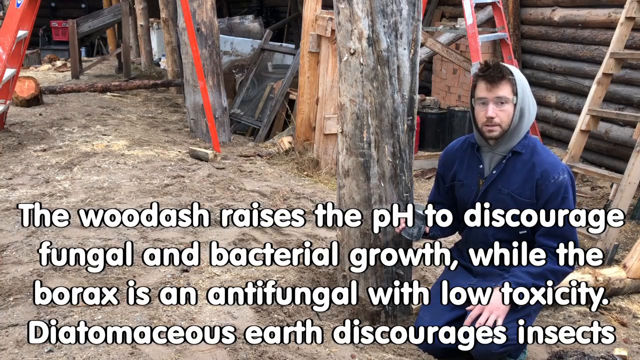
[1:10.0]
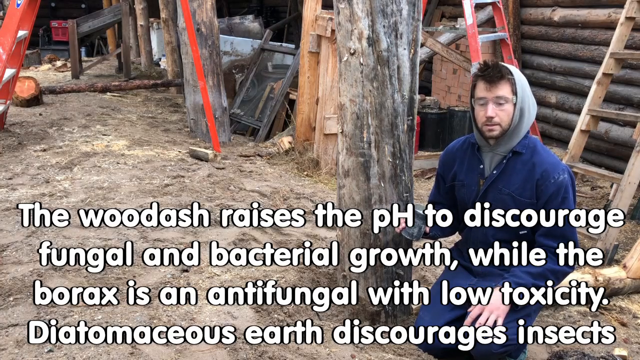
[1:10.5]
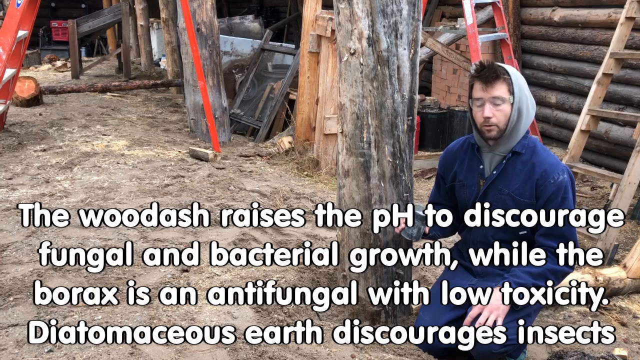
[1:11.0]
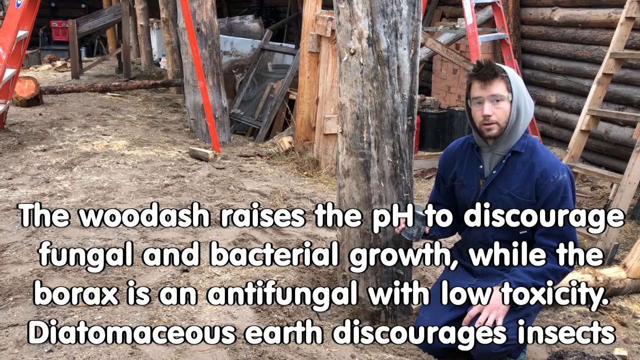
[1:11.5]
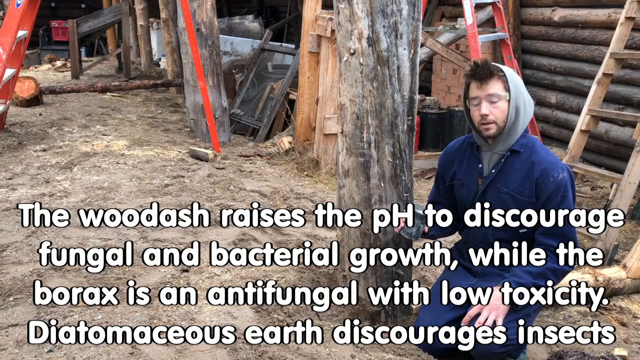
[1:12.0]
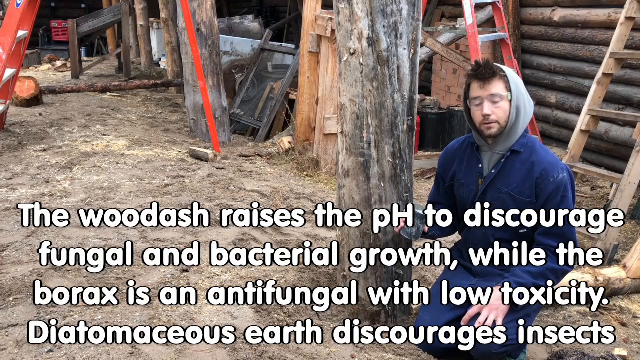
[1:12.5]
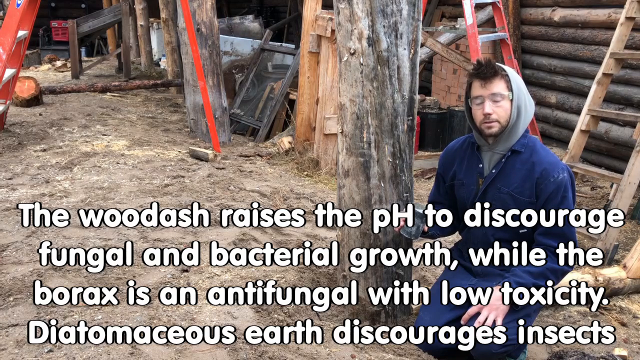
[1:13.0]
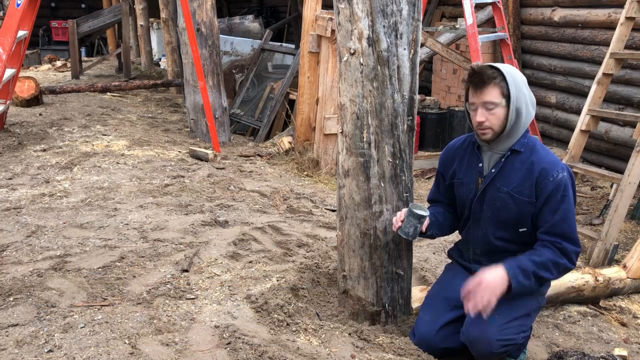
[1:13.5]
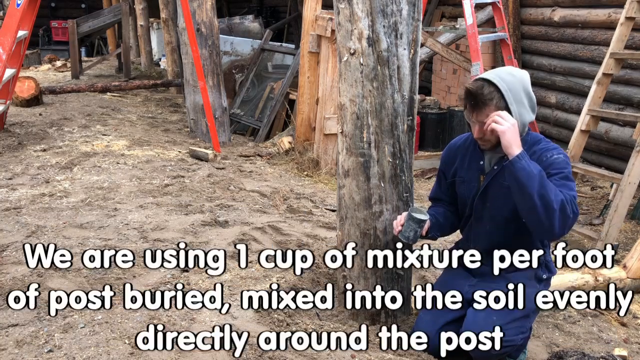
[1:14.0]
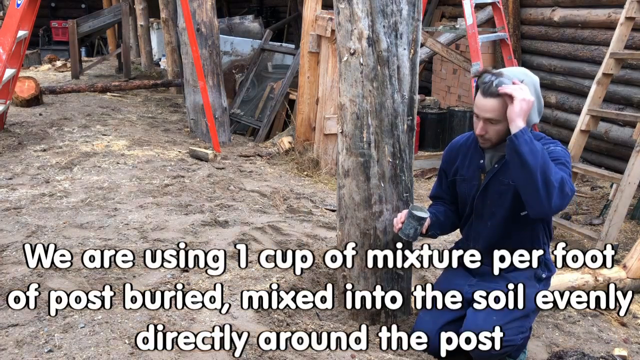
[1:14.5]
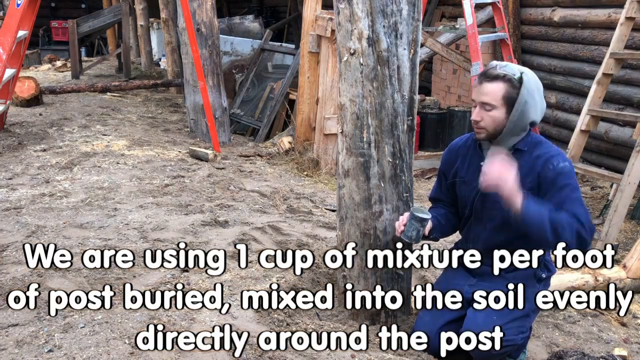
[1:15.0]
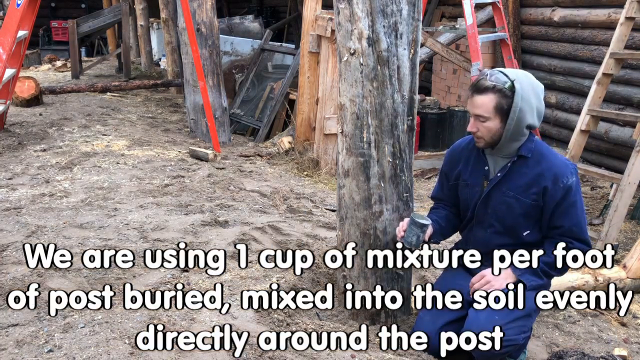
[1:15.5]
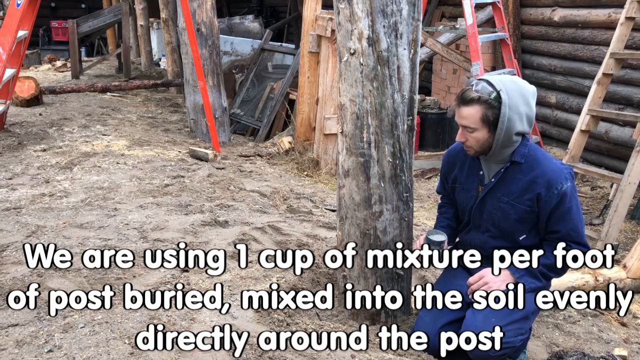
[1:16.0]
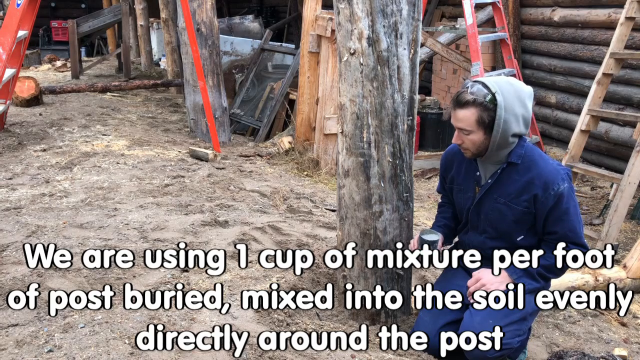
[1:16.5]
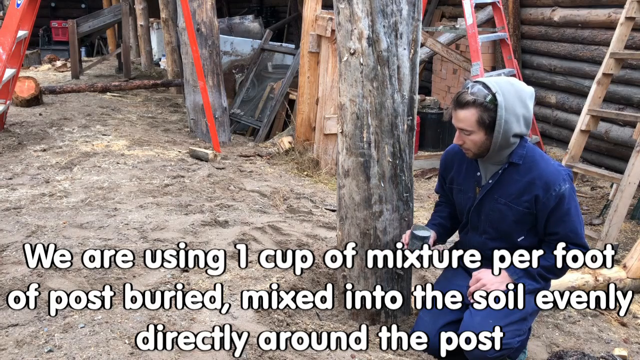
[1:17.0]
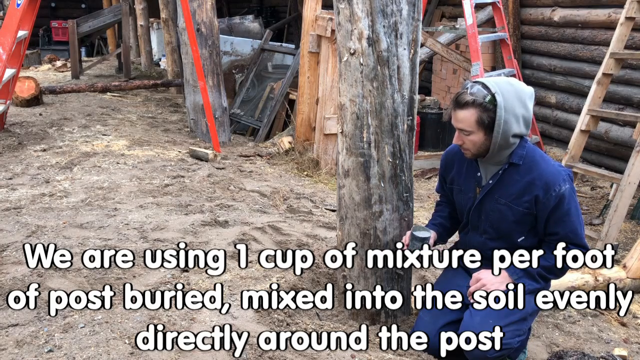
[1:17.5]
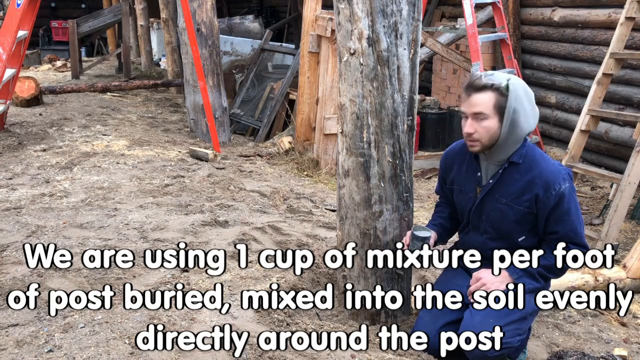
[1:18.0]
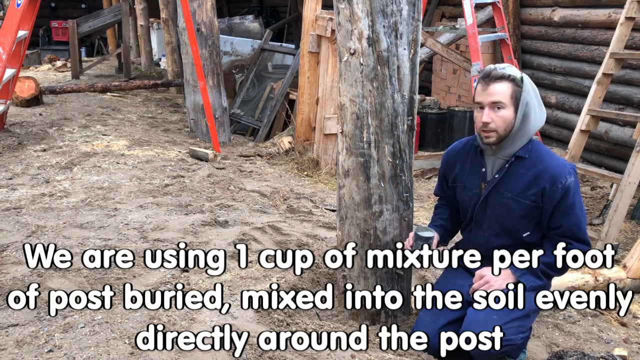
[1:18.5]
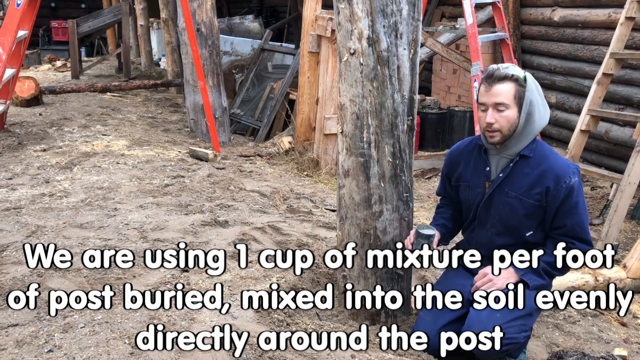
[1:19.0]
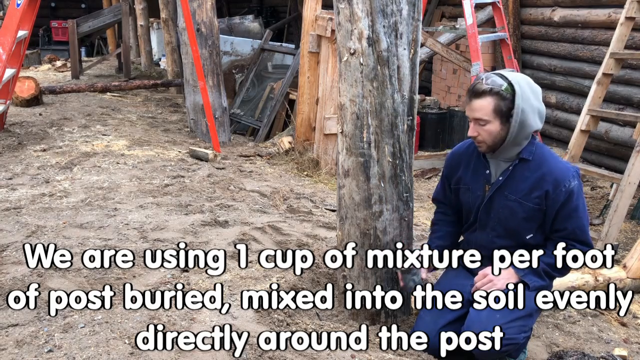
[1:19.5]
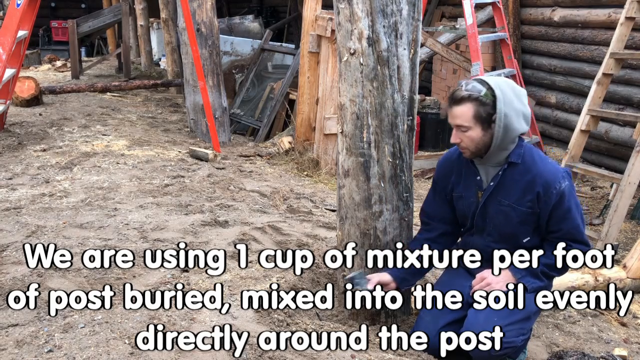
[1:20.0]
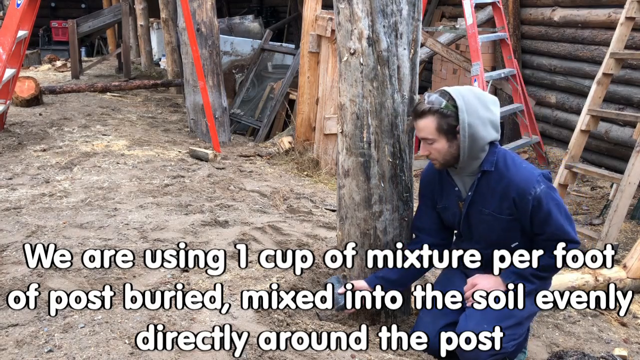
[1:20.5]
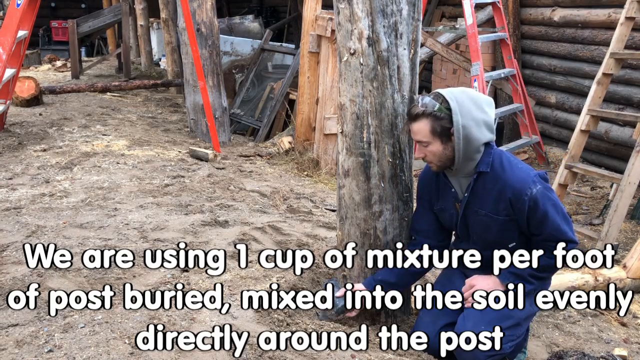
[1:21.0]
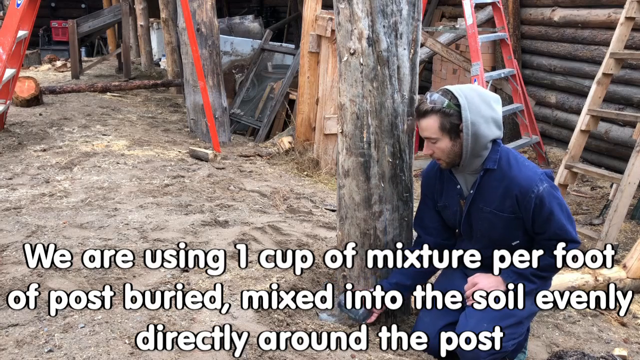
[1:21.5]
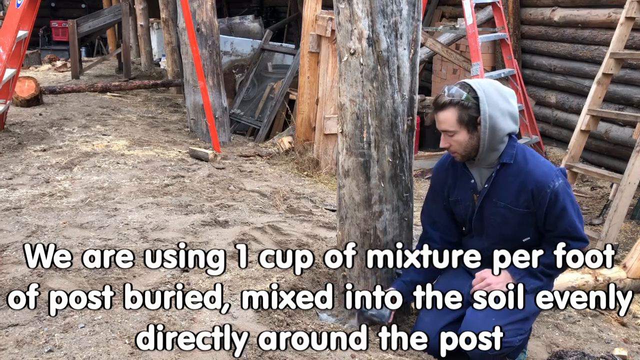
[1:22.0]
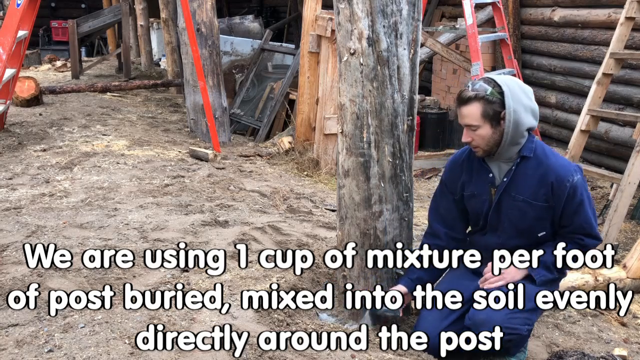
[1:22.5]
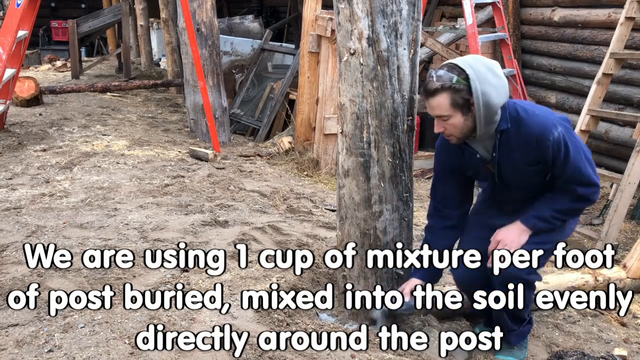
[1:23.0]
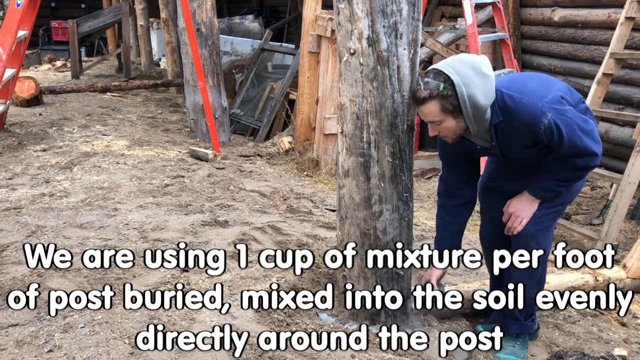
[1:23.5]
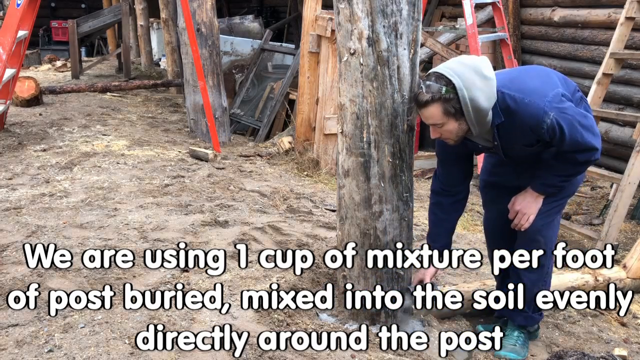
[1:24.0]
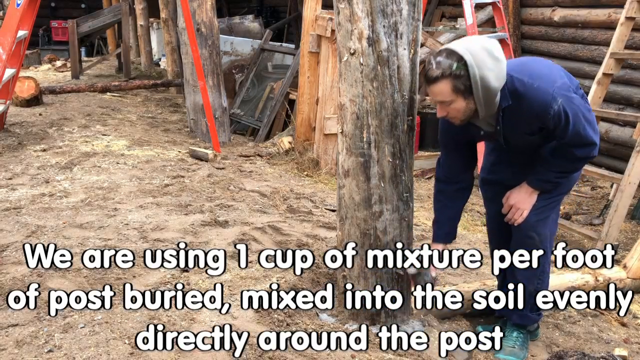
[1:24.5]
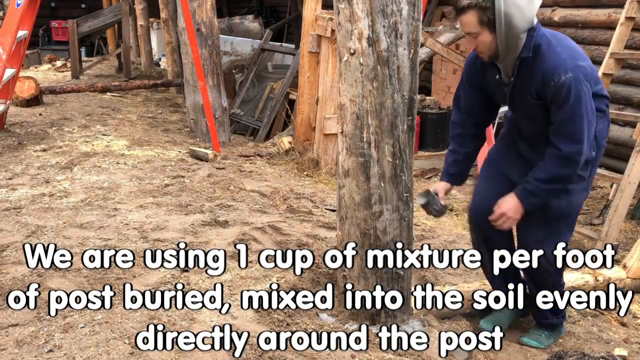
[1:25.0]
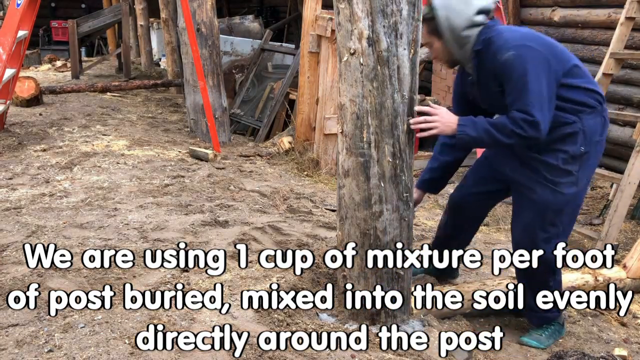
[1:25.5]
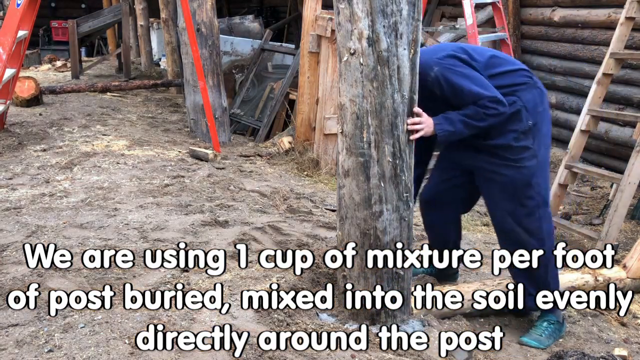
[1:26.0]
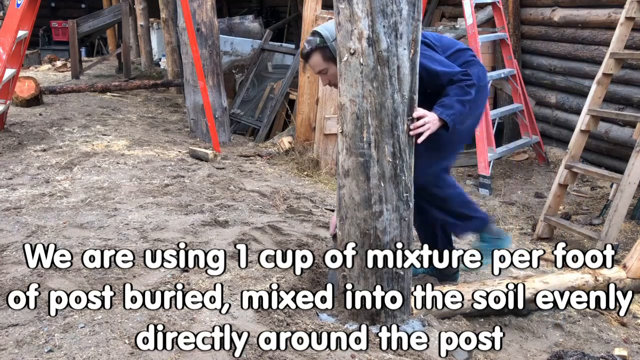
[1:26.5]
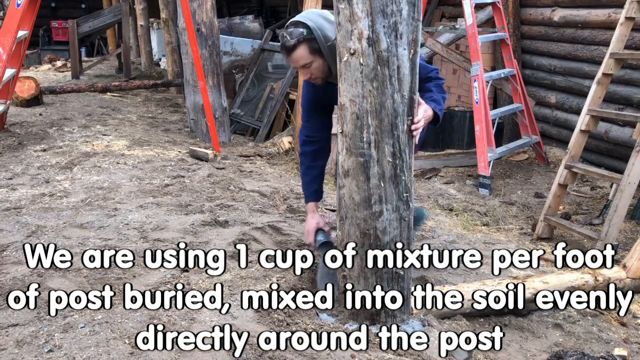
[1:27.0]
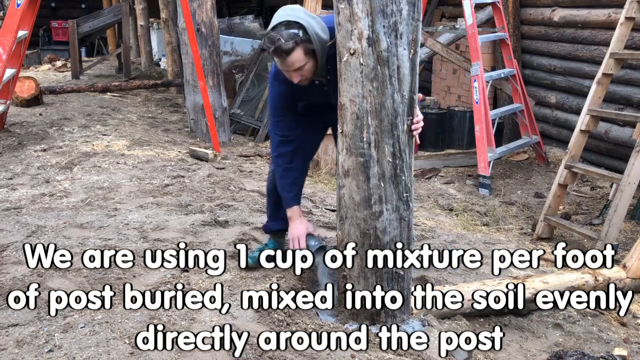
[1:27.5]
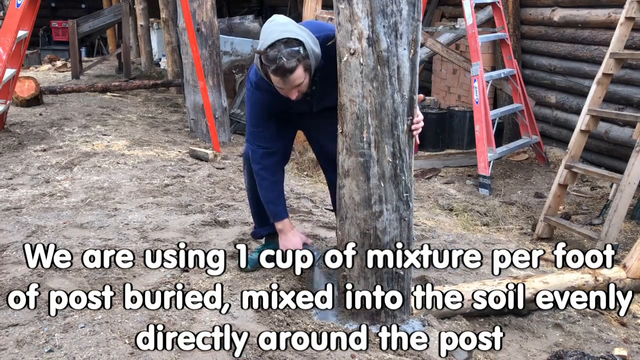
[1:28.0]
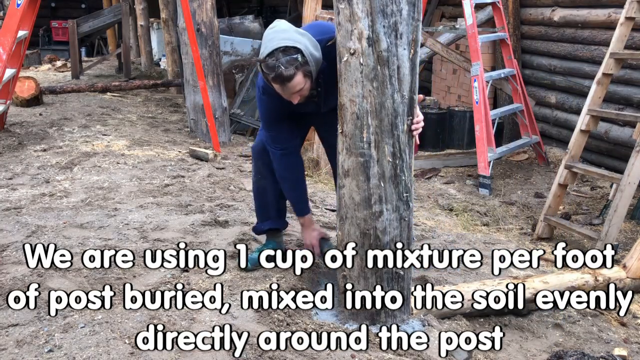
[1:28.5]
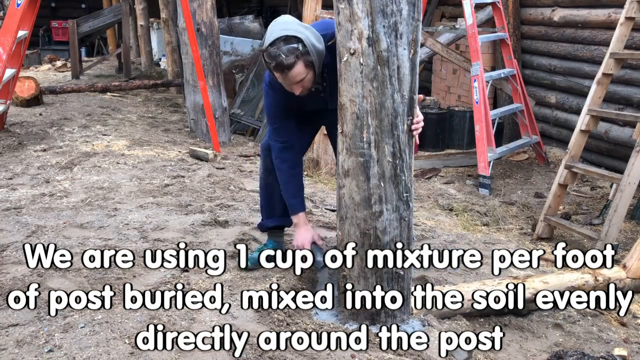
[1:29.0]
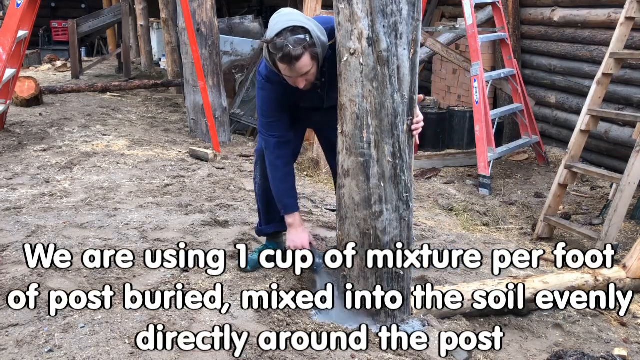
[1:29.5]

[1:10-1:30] A man kneels on the ground next to a large wooden post buried in the ground. Behind him is a line of similar buried posts, and behind that a wooden structure made of logs. Tools and ladders are also visible. He holds a metal cup in his right hand. Text across the bottom of the screen describes what he is doing and reads, in its entirety, "The woodash raises the pH to discourage fungal and bacterial growth, while the borax is an anti-fungal with low toxicity. Diatomaceous earth discourages insects. We are using 1 cup of mixture per foot of post buried, mixed into the soil evenly directly around the post." He then pushes up his goggles and begins shaking a white mixture from the cup around the base of the wooden post. He stands up so that he can walk completely around it and continue pouring the powder.